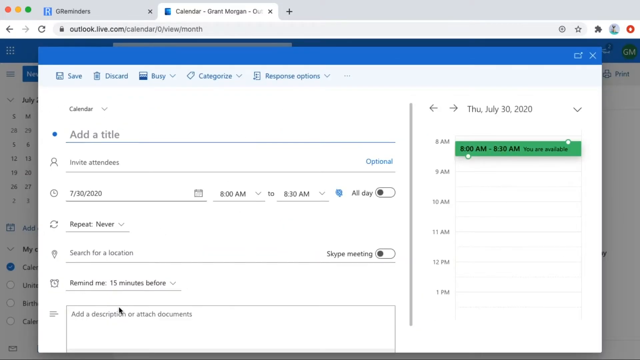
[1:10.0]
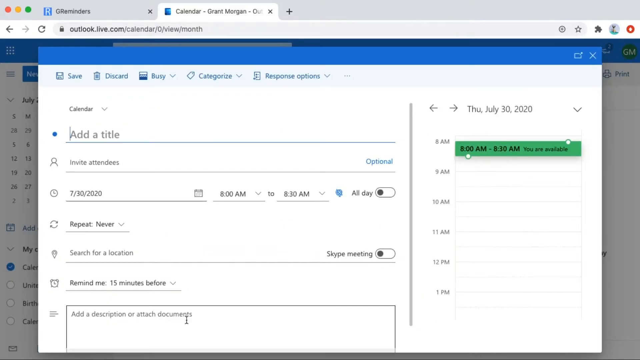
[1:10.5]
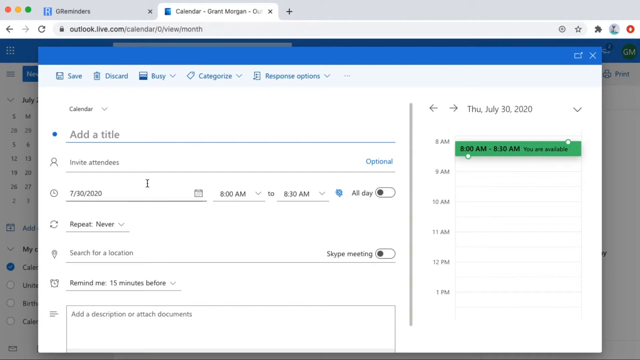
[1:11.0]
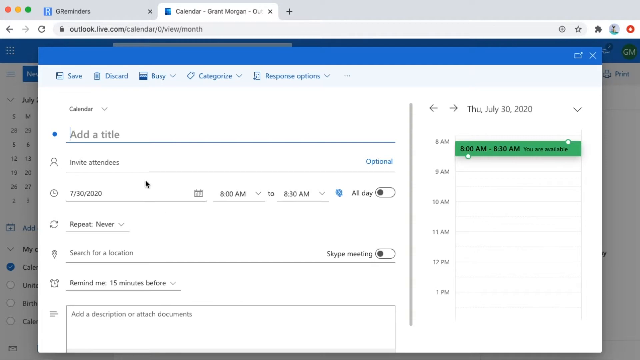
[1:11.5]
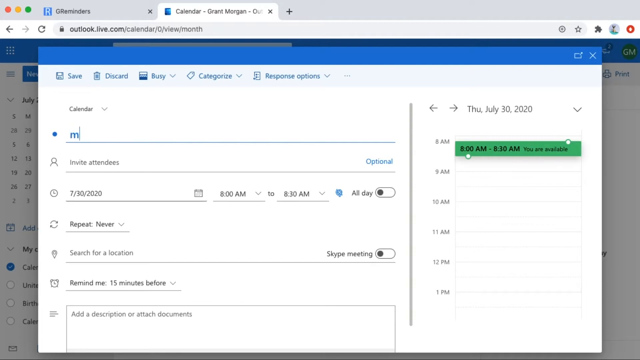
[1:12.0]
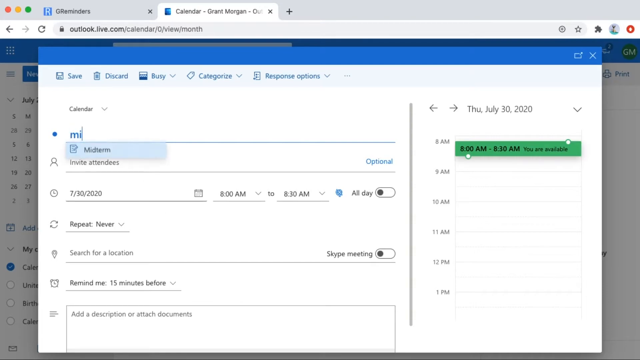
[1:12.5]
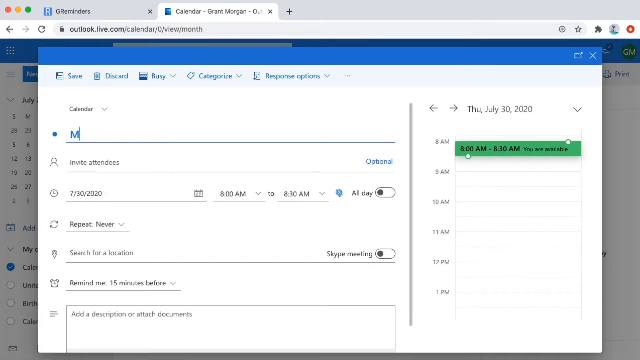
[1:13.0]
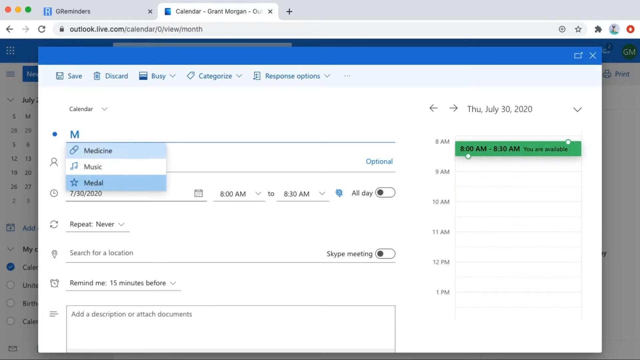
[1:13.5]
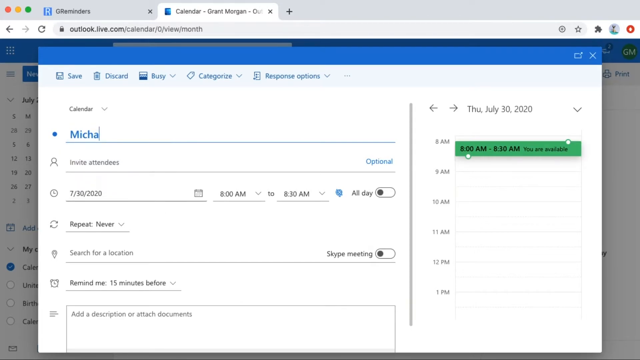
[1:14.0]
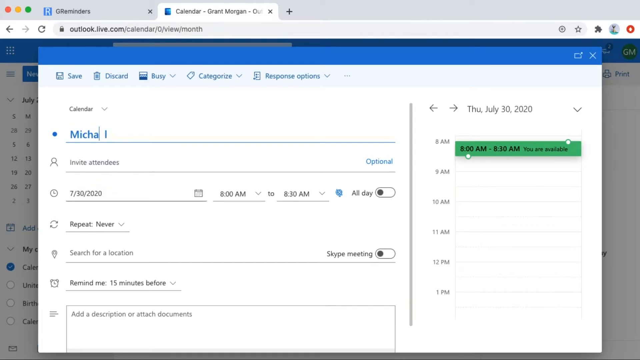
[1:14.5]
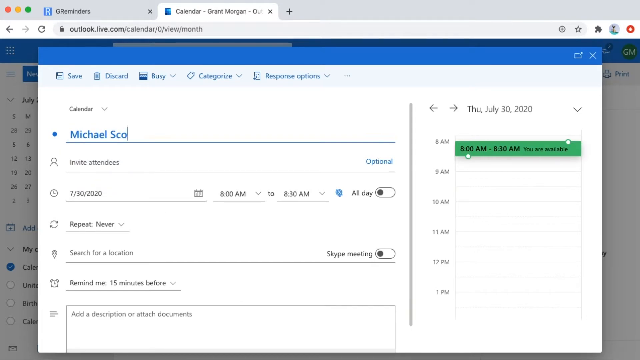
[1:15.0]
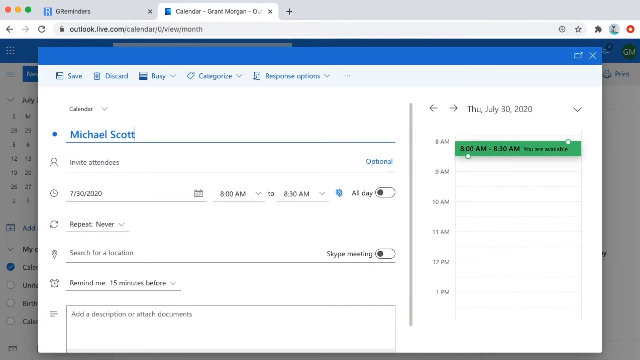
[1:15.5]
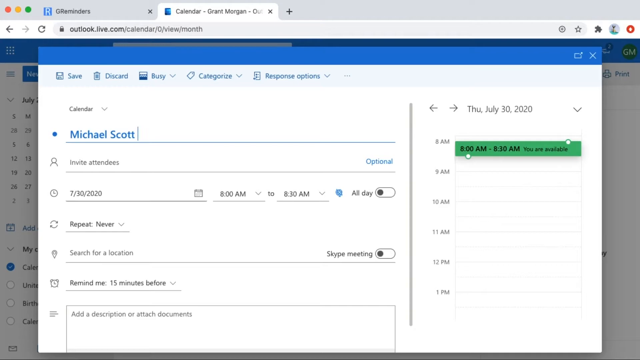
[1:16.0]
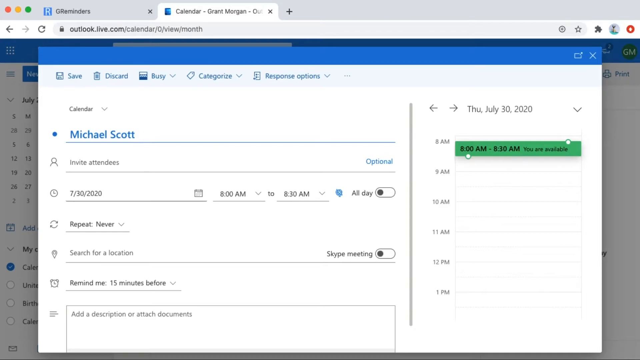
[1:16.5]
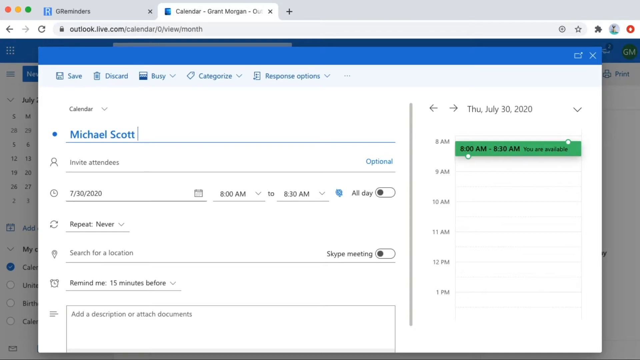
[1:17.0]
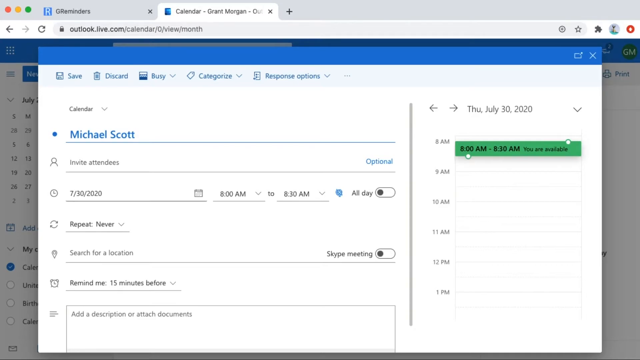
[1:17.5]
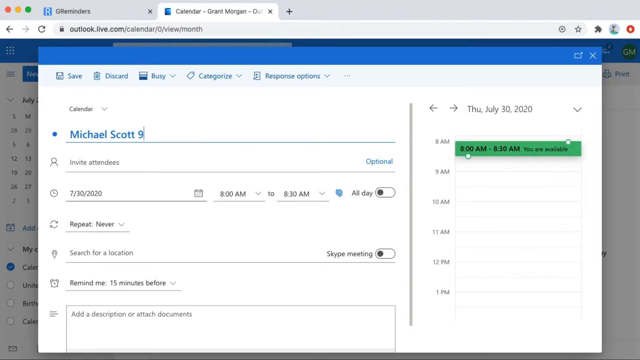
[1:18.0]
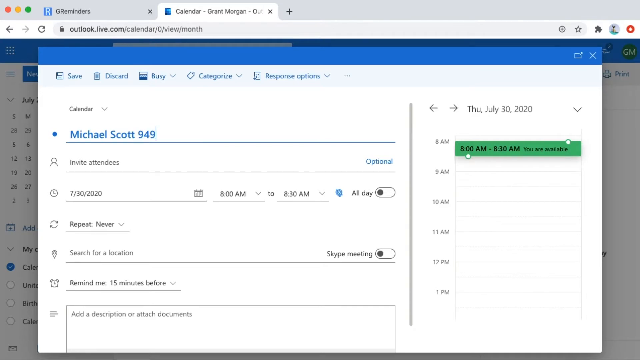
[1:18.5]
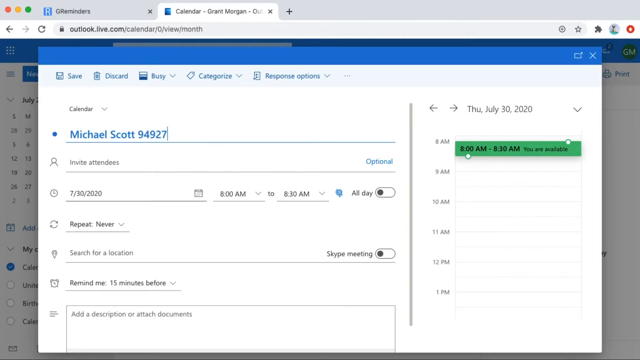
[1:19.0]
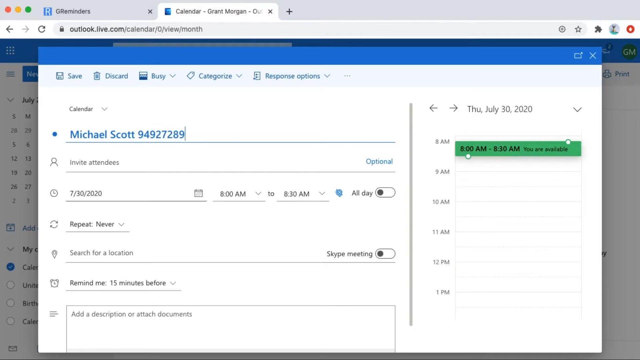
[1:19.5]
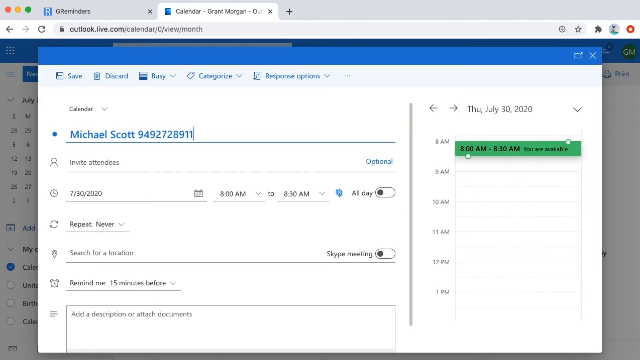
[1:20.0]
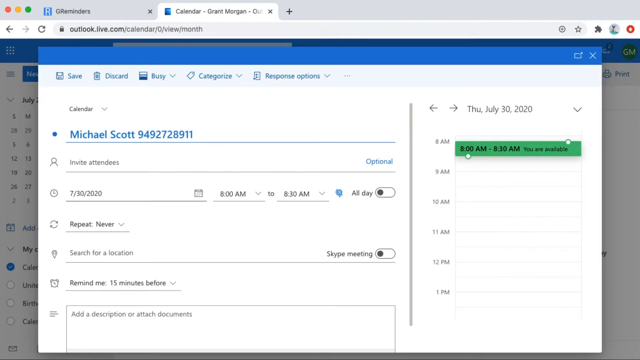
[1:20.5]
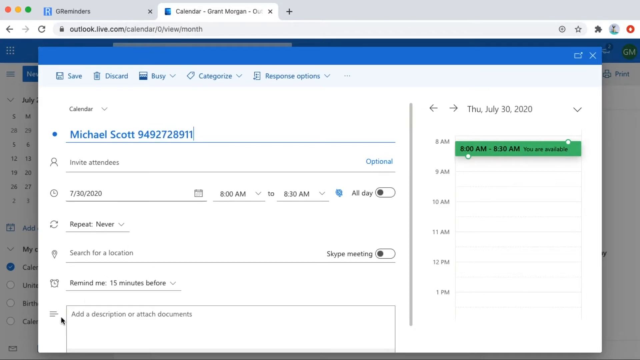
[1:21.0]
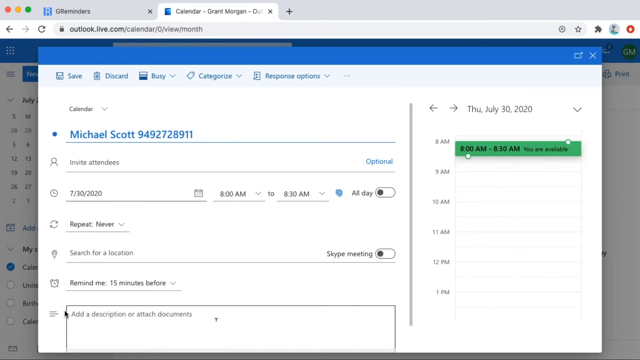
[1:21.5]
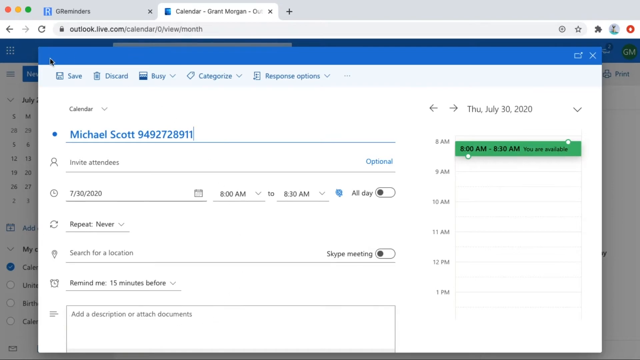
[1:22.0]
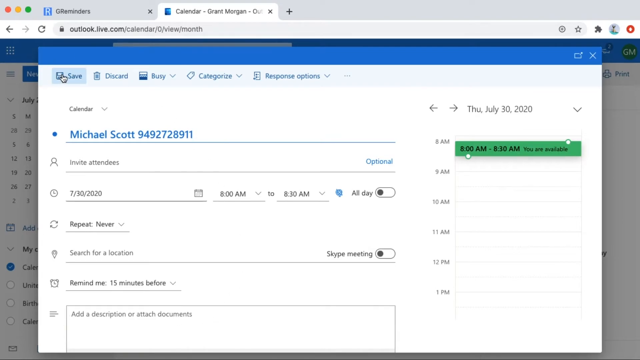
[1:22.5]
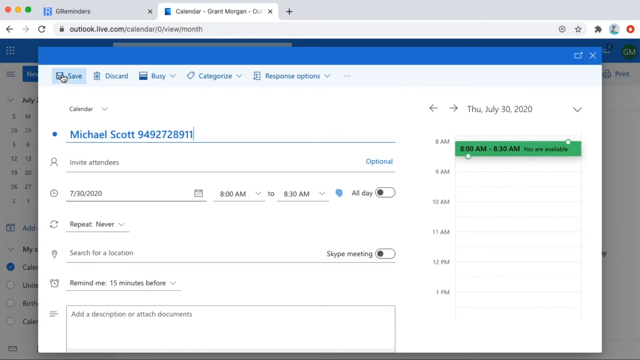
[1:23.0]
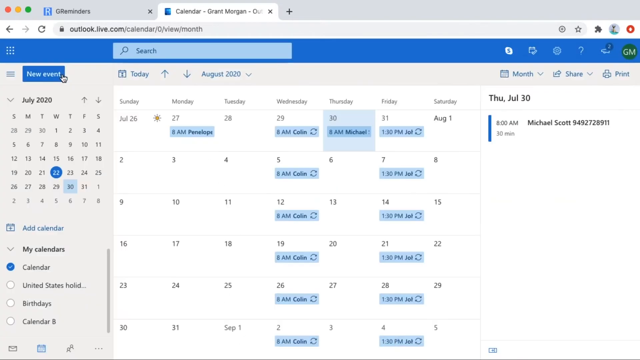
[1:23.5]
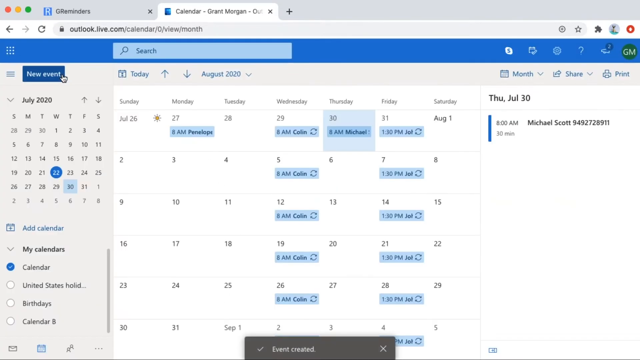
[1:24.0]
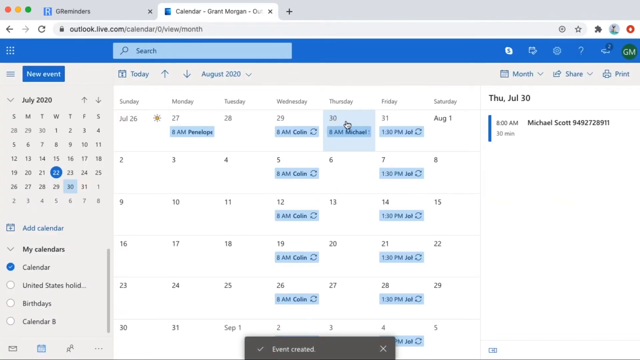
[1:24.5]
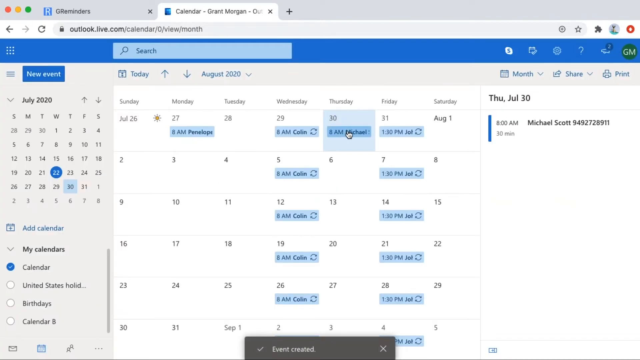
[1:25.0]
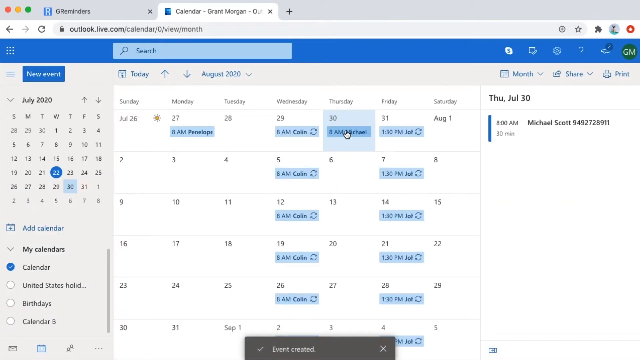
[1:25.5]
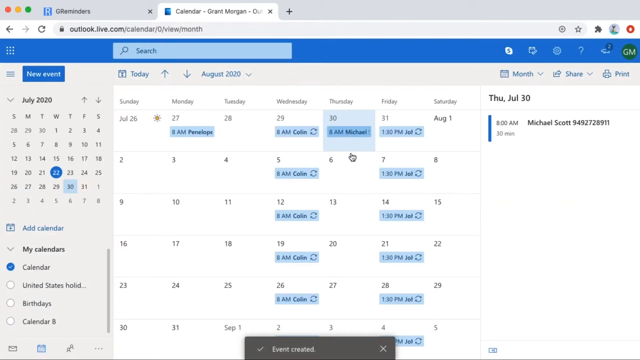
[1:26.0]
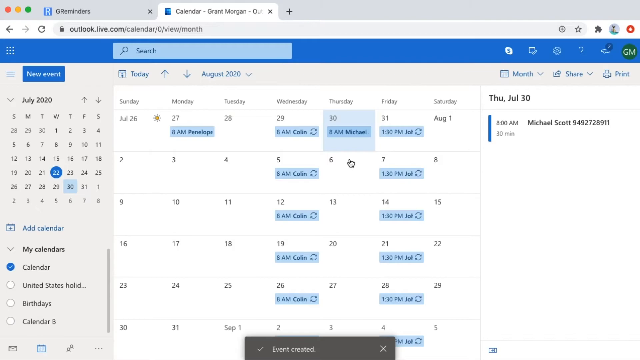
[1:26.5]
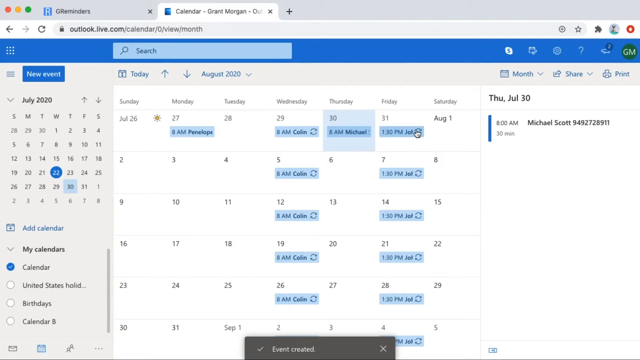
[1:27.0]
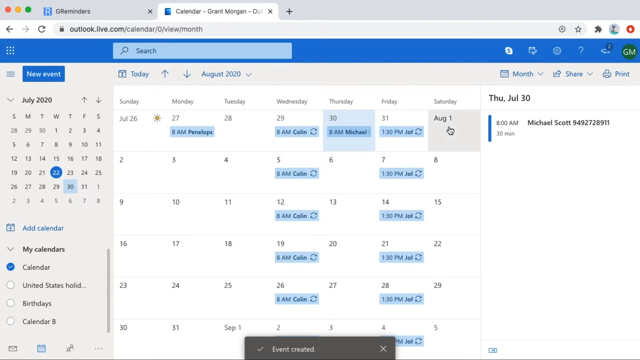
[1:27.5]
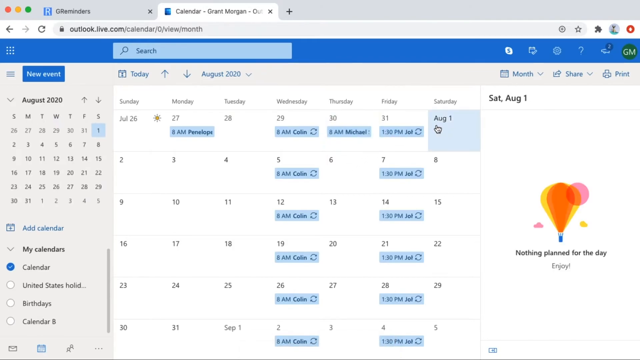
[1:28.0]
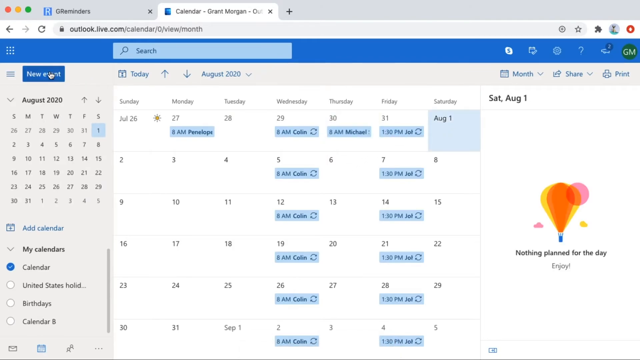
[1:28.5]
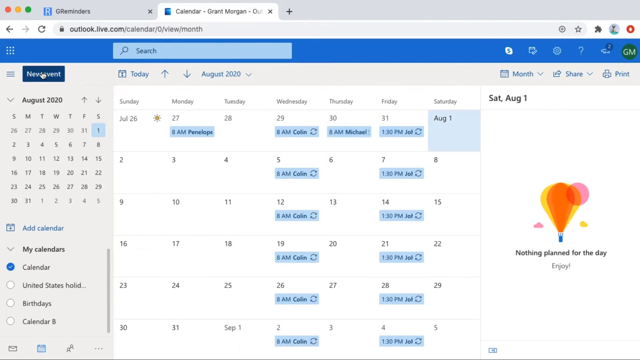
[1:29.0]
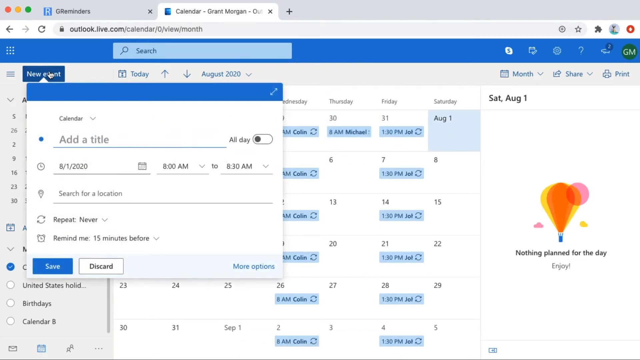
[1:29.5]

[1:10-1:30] In Outlook, the person creates a new calendar meeting with Michael Scott. He sets the options he needs, adds no description, and saves the meeting on Thursday at 8 a.m. He then starts another event on Saturday, but it is not shown further.